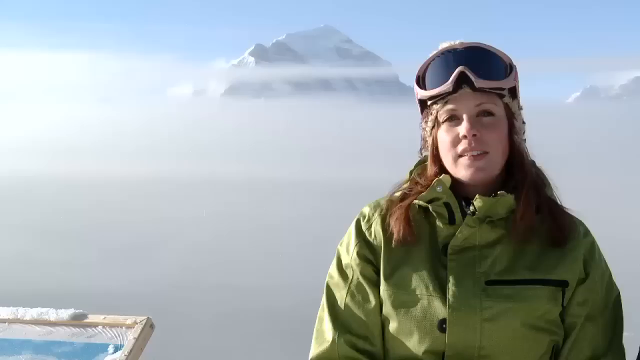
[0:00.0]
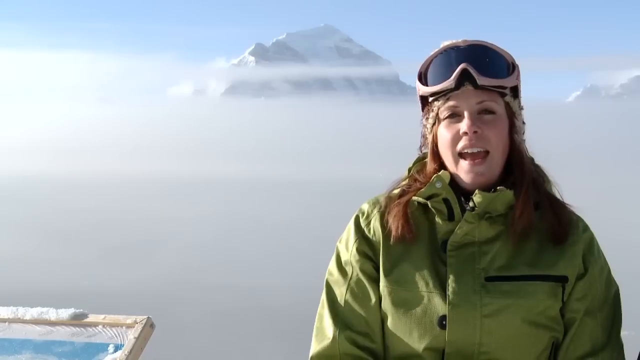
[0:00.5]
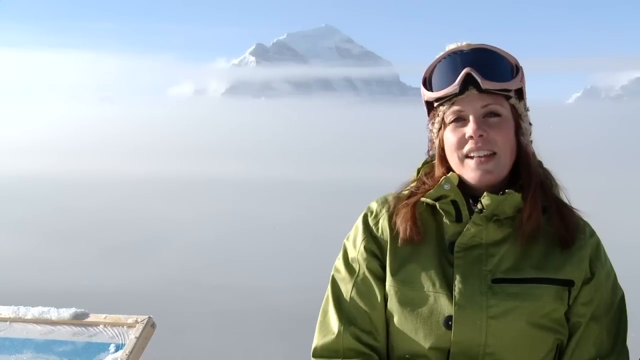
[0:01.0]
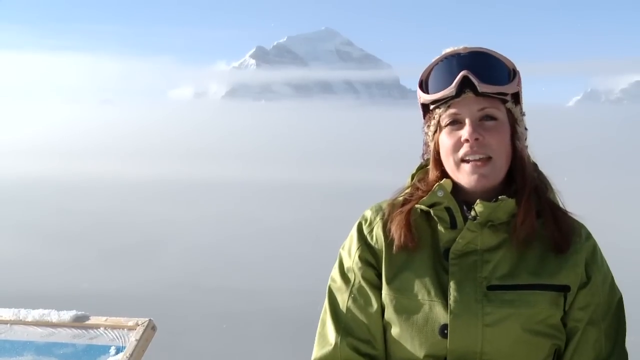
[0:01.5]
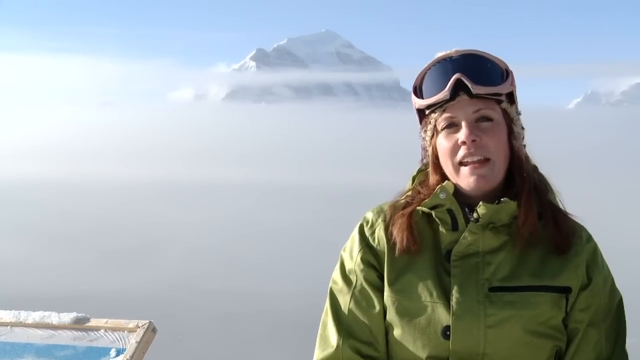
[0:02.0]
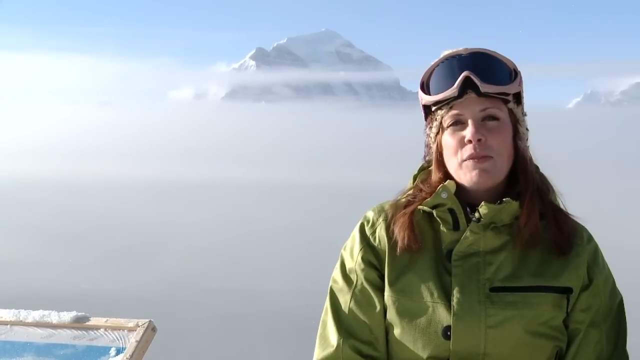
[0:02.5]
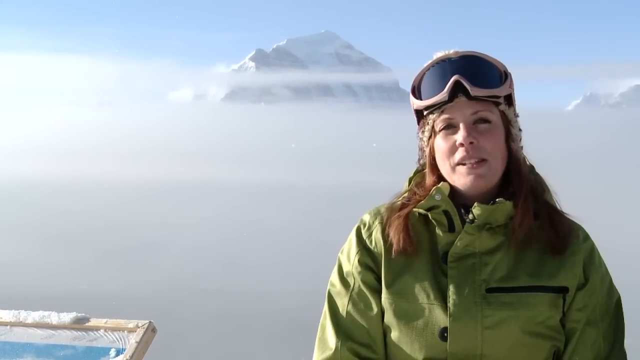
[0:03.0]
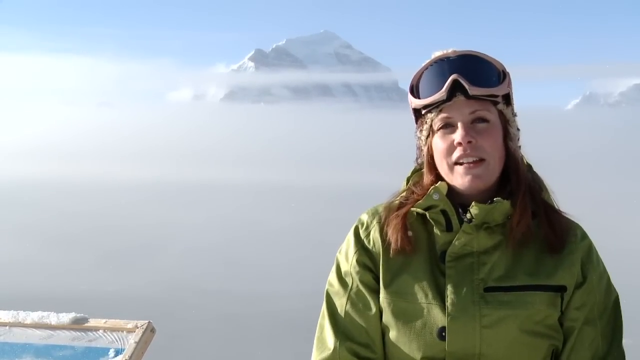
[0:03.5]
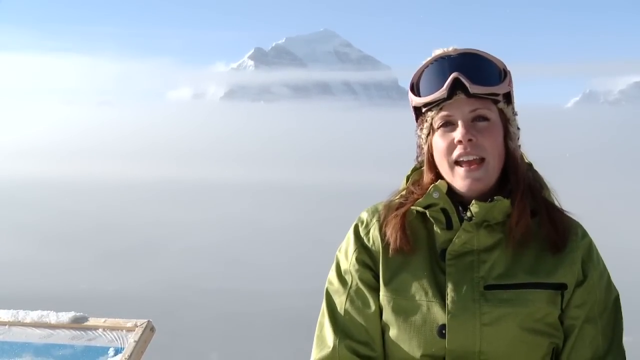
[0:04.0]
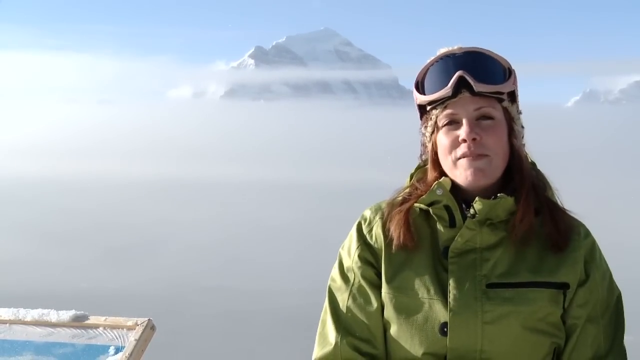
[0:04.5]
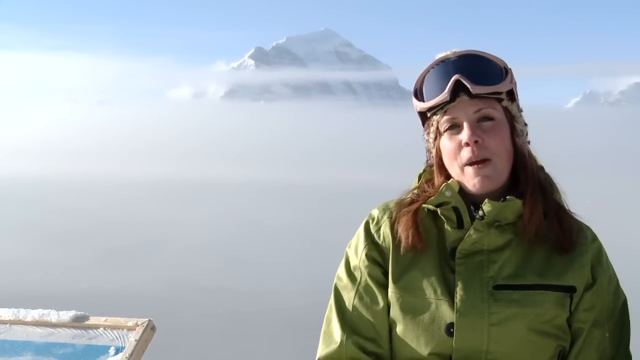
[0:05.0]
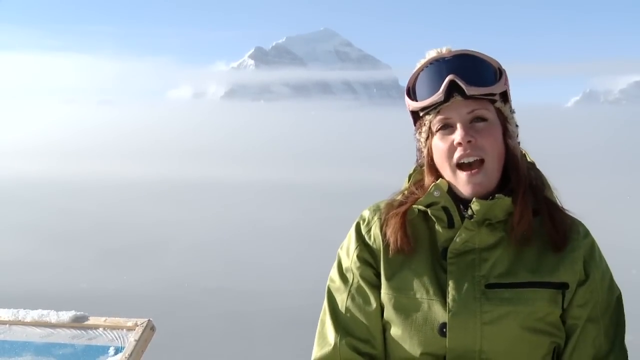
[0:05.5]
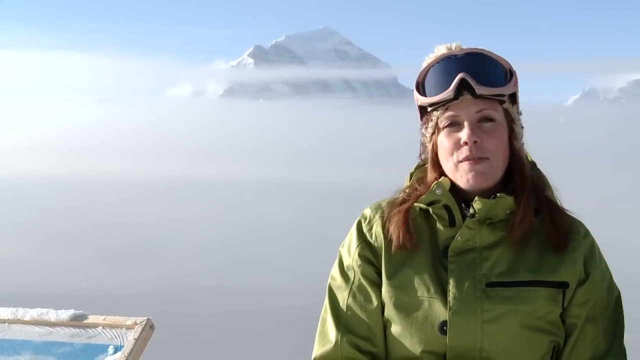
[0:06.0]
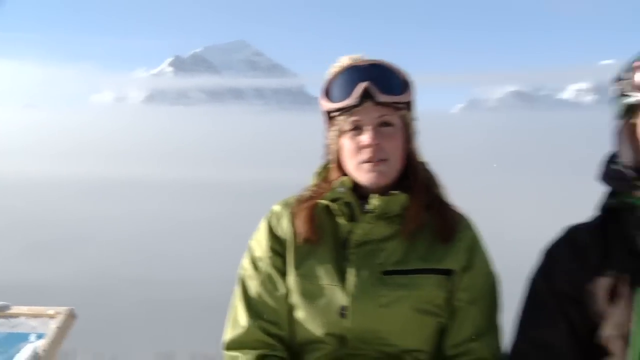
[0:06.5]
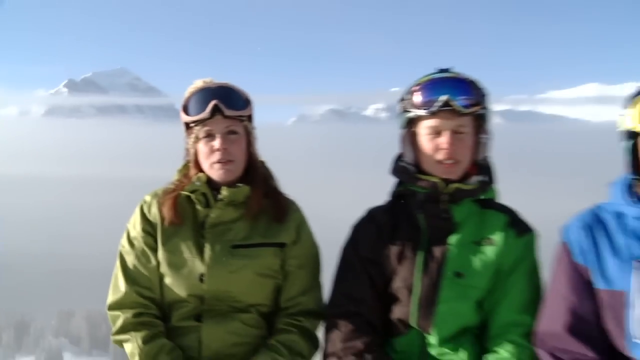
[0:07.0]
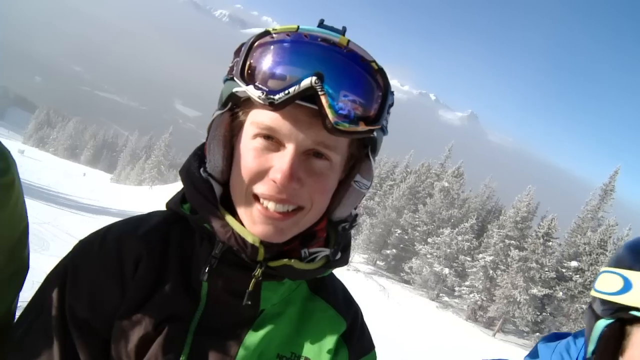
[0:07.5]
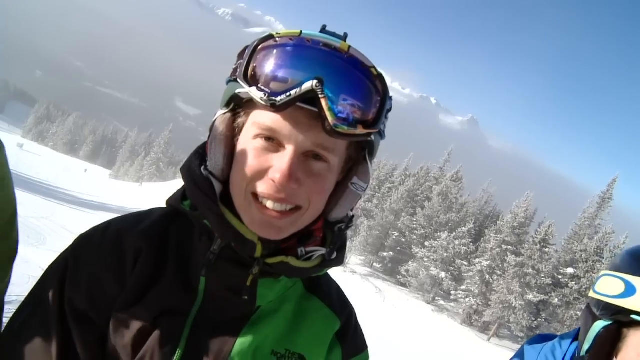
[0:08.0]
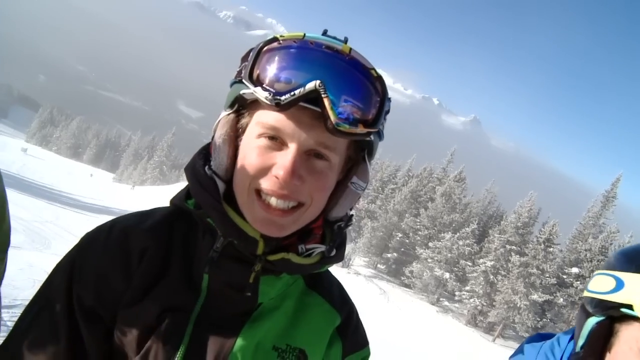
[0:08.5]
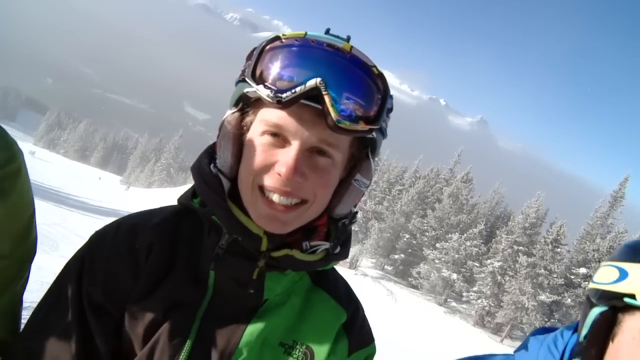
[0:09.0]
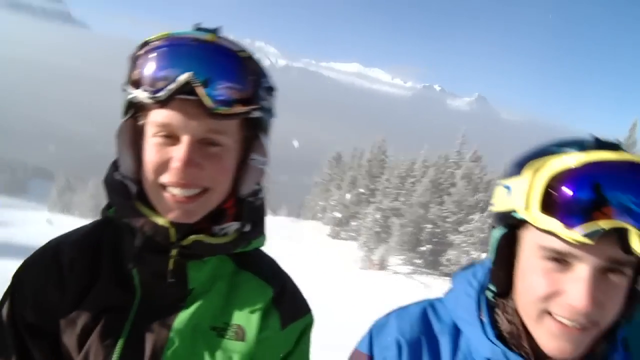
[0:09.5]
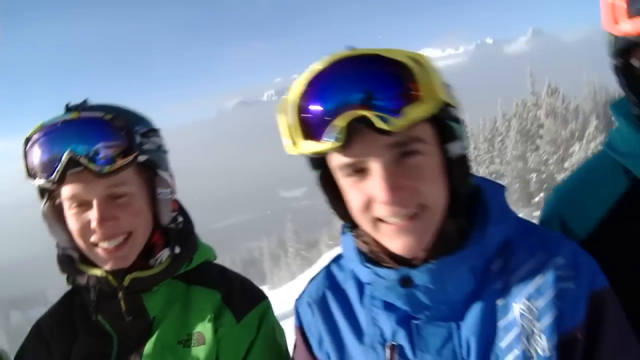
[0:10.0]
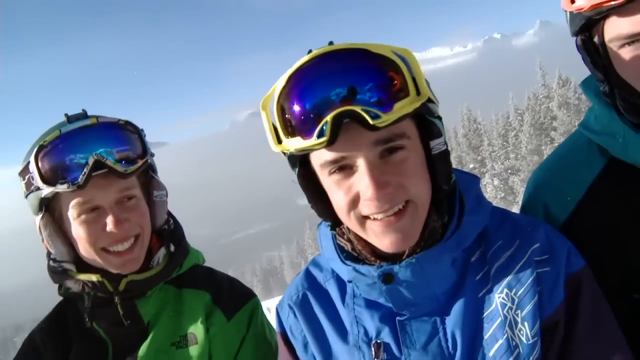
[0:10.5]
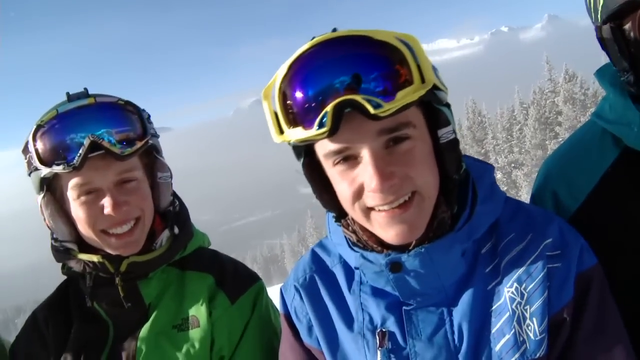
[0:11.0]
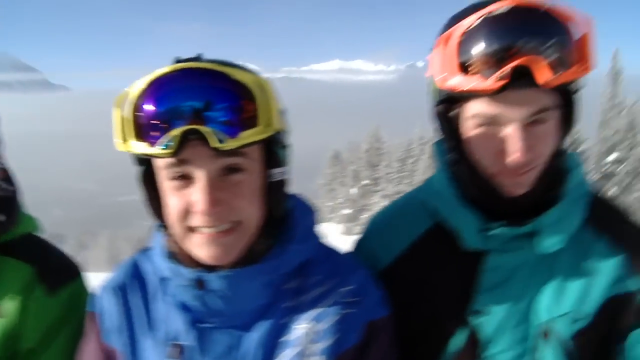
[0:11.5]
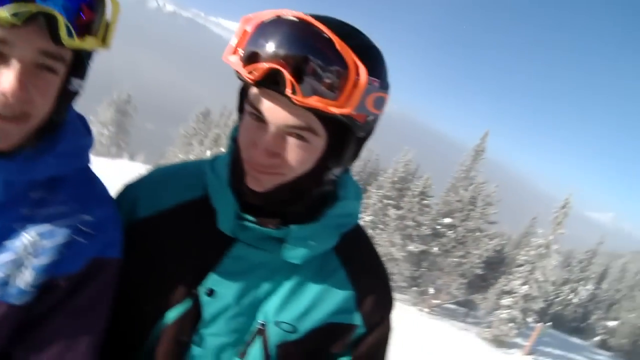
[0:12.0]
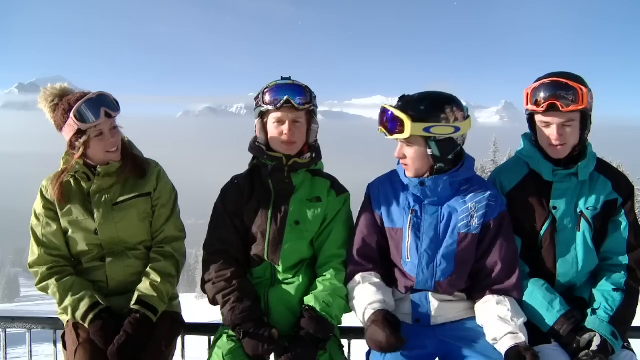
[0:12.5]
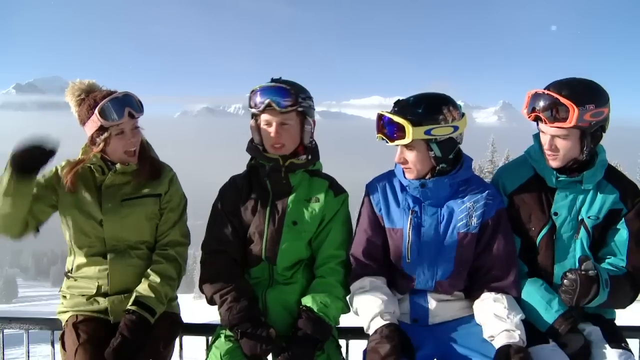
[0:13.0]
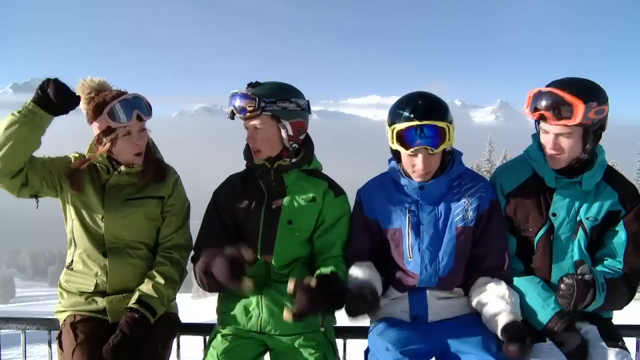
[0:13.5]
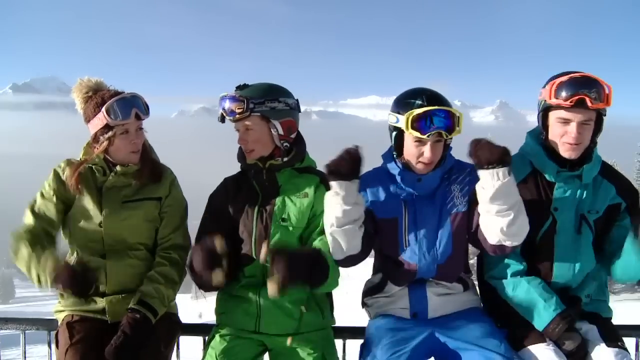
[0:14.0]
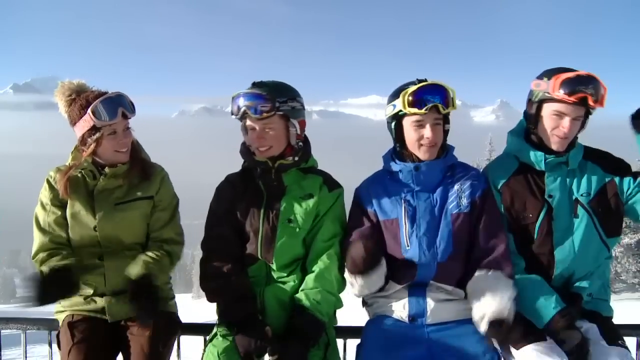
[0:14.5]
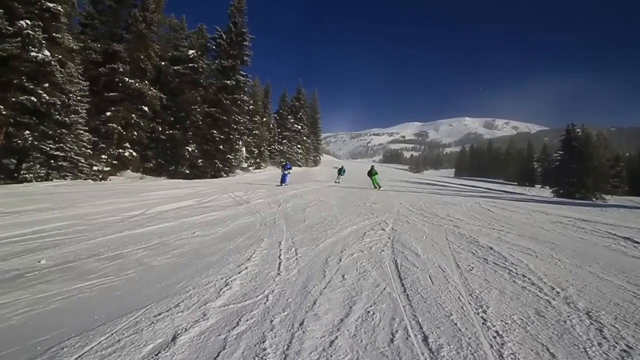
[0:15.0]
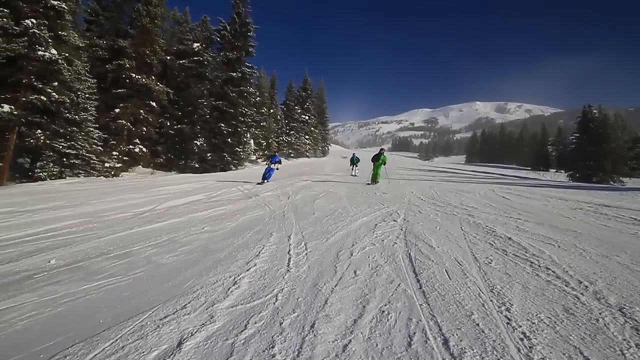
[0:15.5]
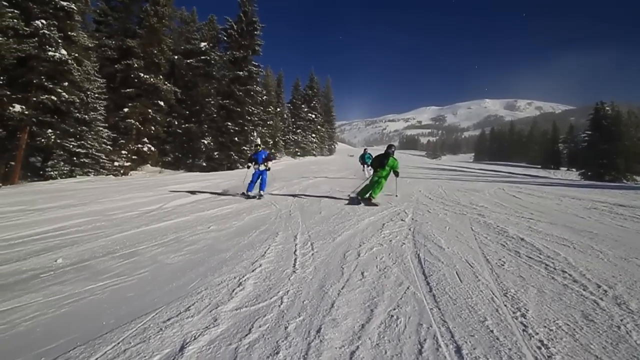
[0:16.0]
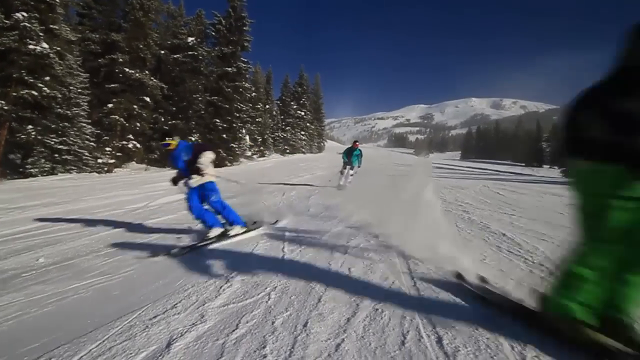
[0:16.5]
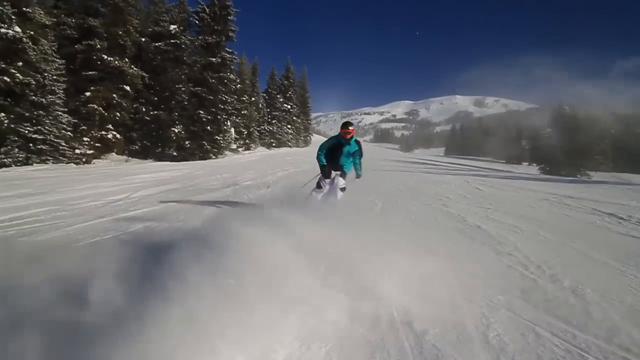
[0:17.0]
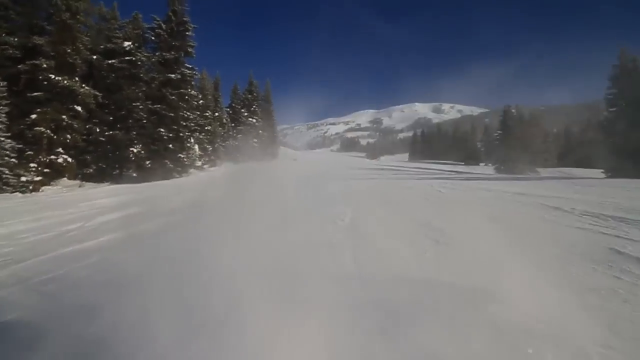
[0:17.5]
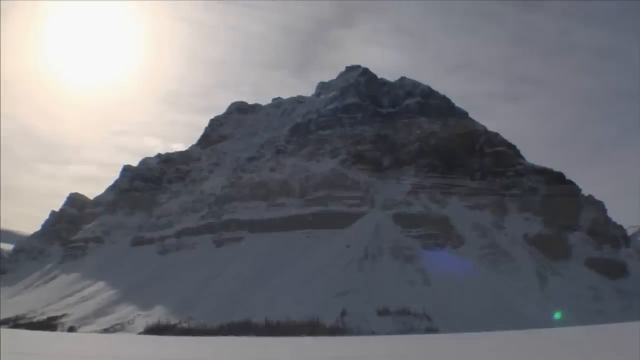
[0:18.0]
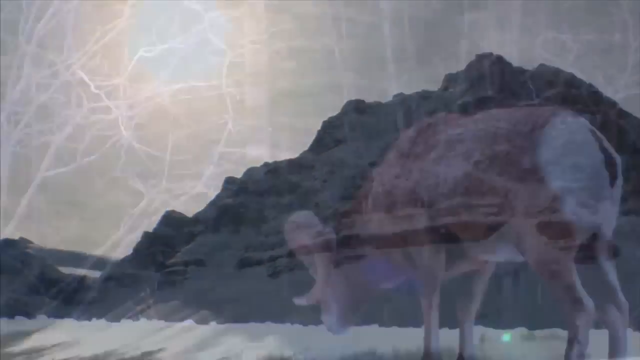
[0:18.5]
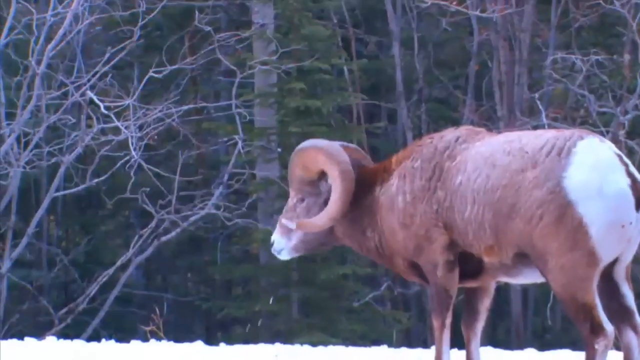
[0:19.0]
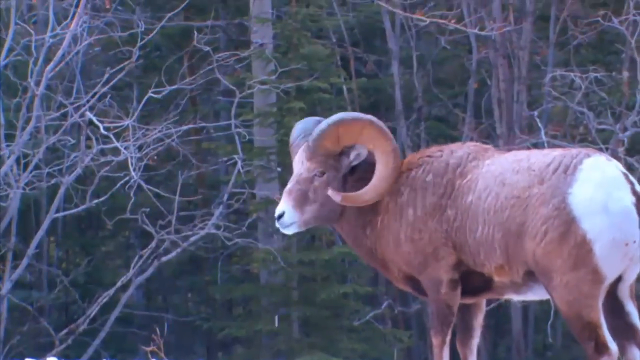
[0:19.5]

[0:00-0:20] A white woman appears on the right-hand side of the frame, wearing ski goggles with white outlines up on her forehead and a lime green jacket. She looks to have reddish hair. Behind her is a mountain range; it is a very sunny day, with a lot of haze and thin clouds in the sky. She talks directly to the camera, her head moving back and forth slightly. The shot cuts to a wider view of three people, then pans in to the first person, a white person with ski goggles up on top of their head and a greenish-yellowish jacket, who is smiling. It cuts to another kid in a blue jacket with yellow ski goggles, then to another white kid with orange ski goggles and a black and gray shirt. It cuts back out to the three of them: the three boys, on the right-hand side, look at the woman on the left. She puts her hand up in the air, kind of whooping and hollering, and the boys do the same with both hands and clap. The video cuts to them skiing down the hill straight toward the camera, then to a mountain with a goat on it.